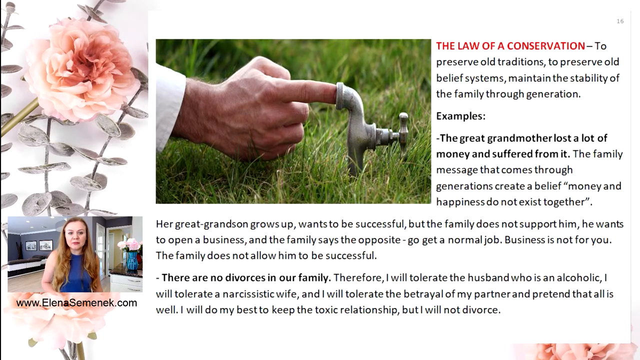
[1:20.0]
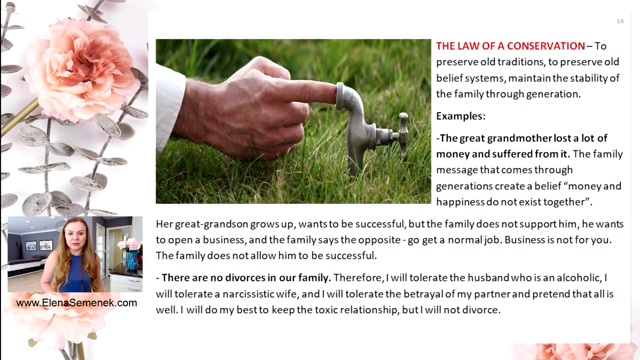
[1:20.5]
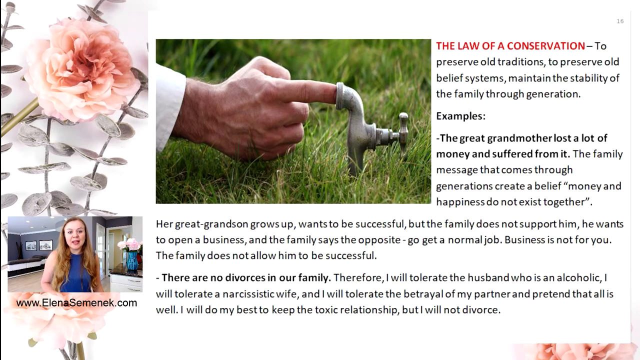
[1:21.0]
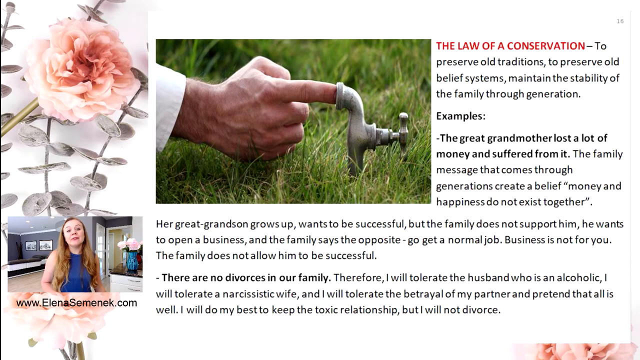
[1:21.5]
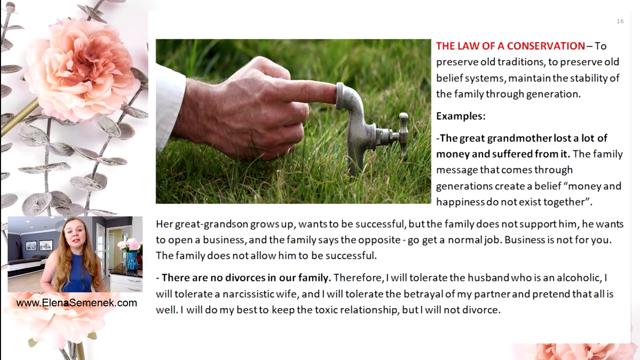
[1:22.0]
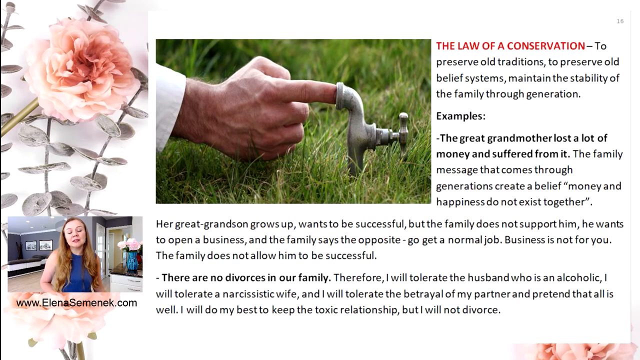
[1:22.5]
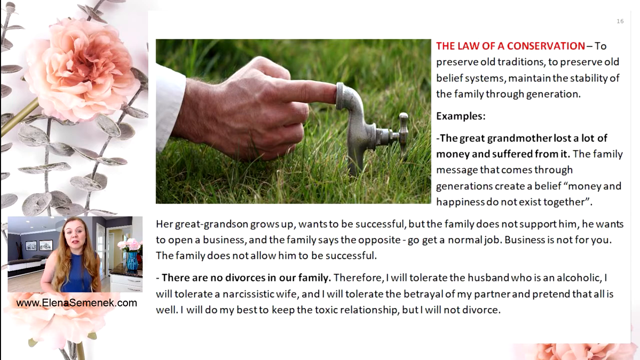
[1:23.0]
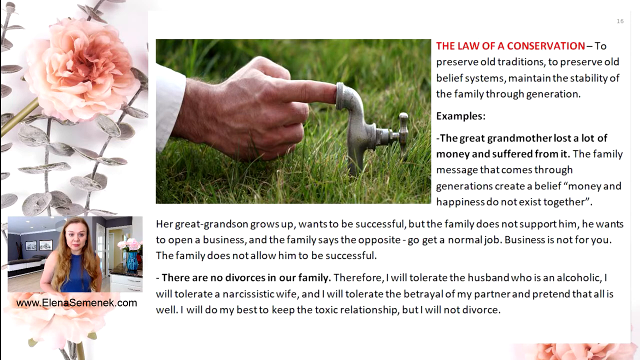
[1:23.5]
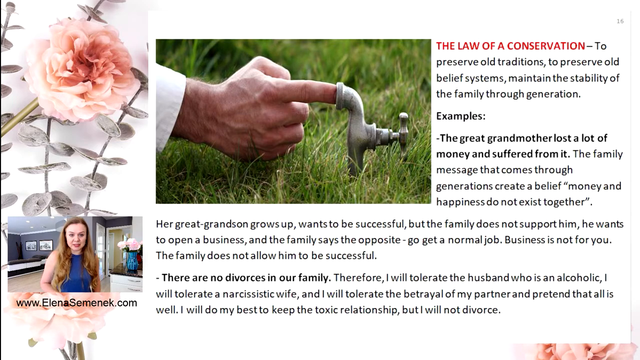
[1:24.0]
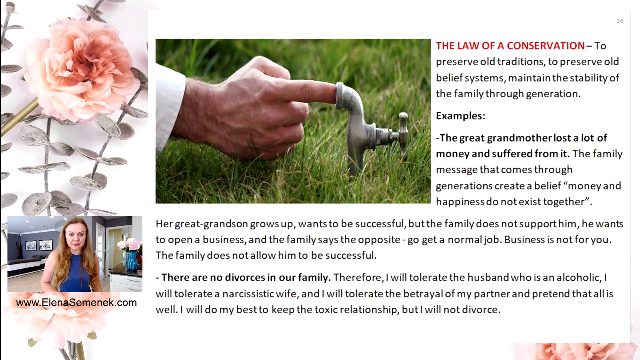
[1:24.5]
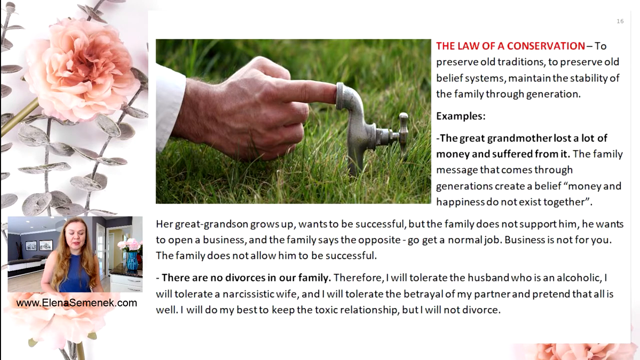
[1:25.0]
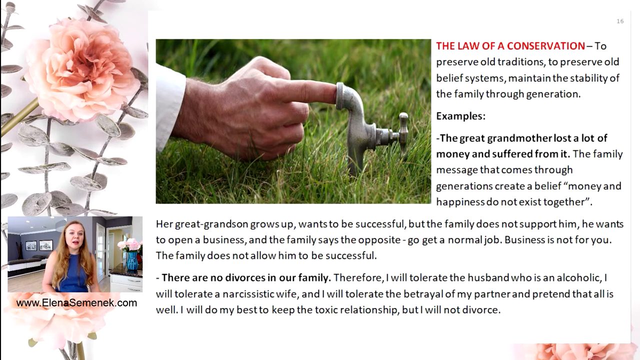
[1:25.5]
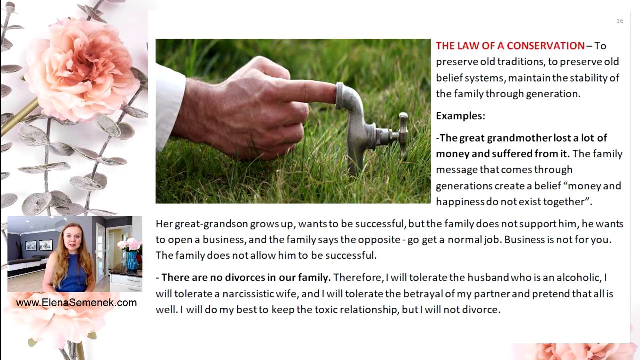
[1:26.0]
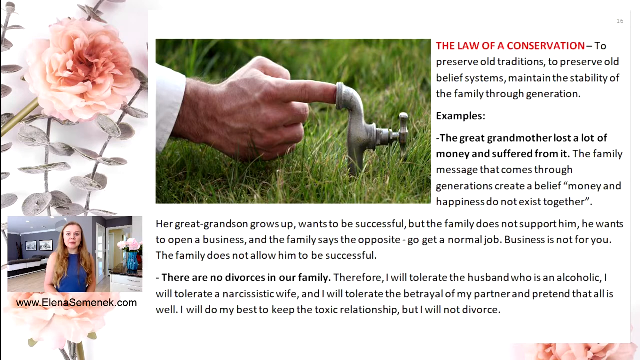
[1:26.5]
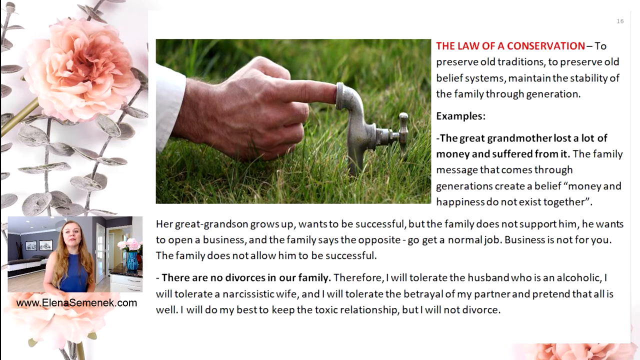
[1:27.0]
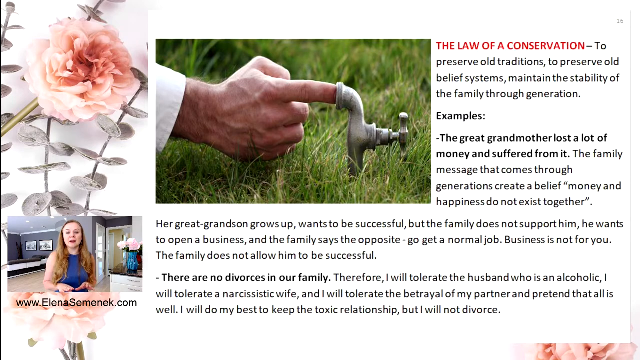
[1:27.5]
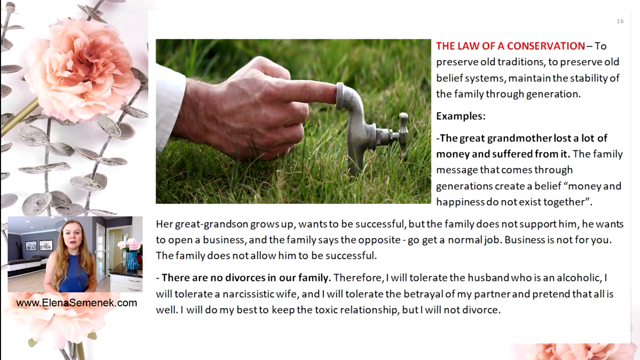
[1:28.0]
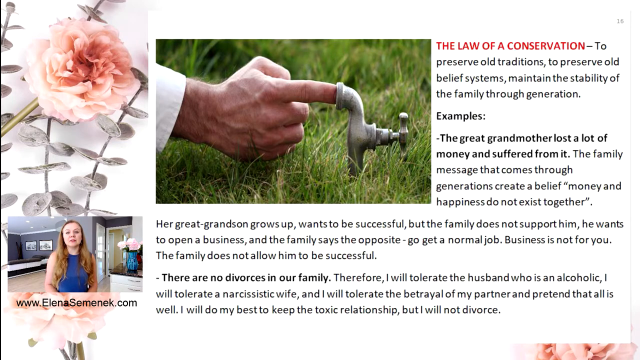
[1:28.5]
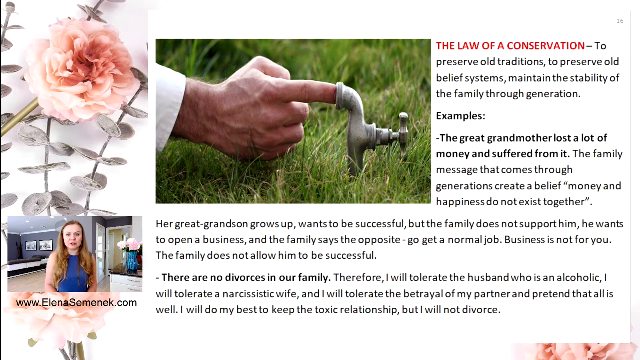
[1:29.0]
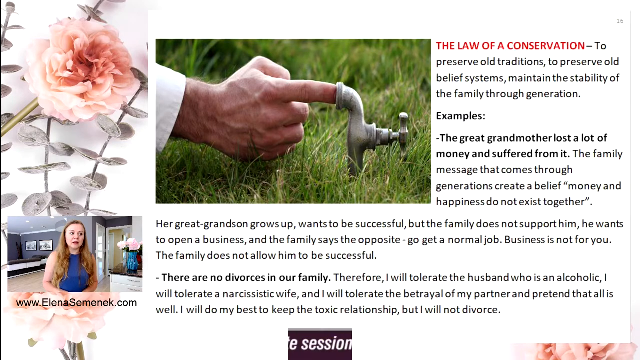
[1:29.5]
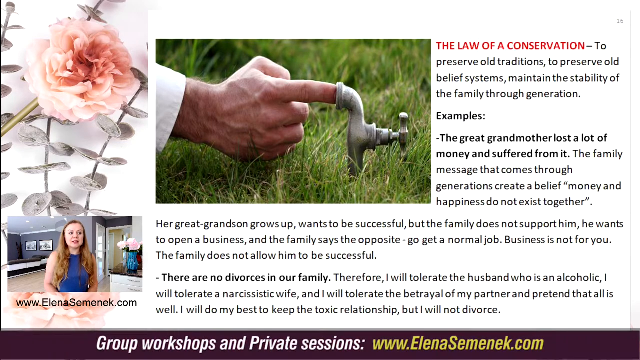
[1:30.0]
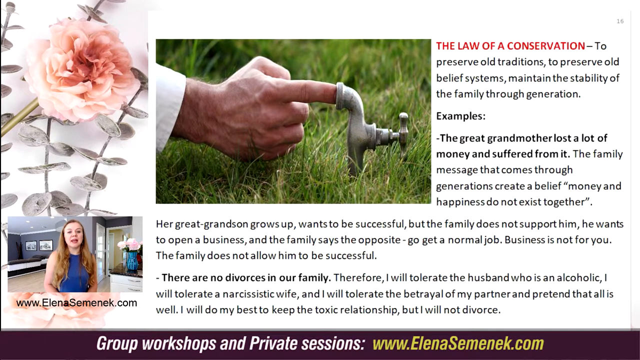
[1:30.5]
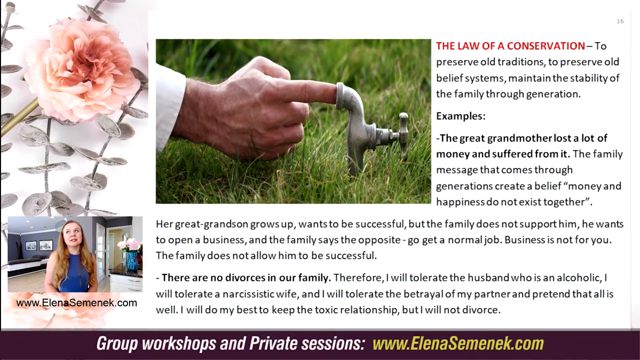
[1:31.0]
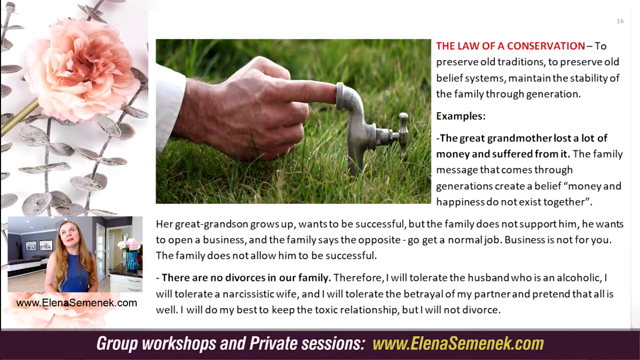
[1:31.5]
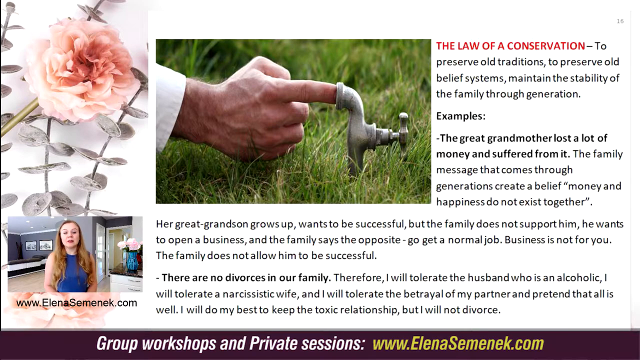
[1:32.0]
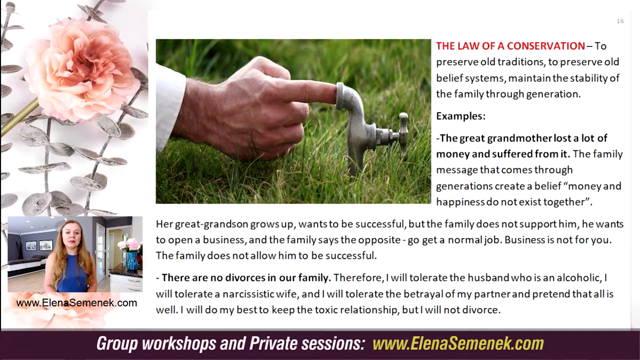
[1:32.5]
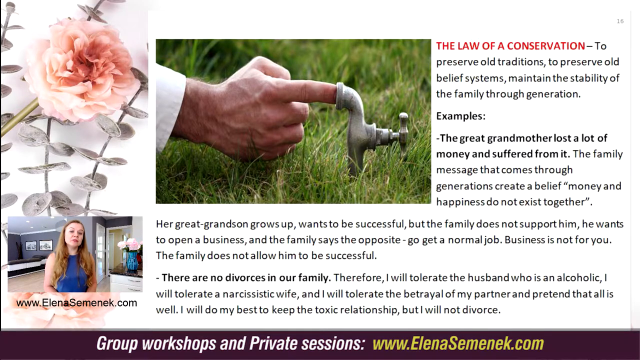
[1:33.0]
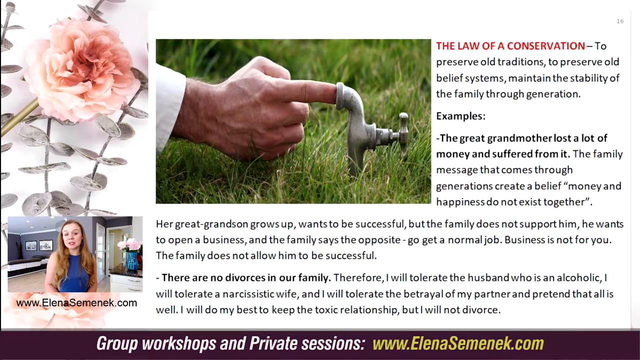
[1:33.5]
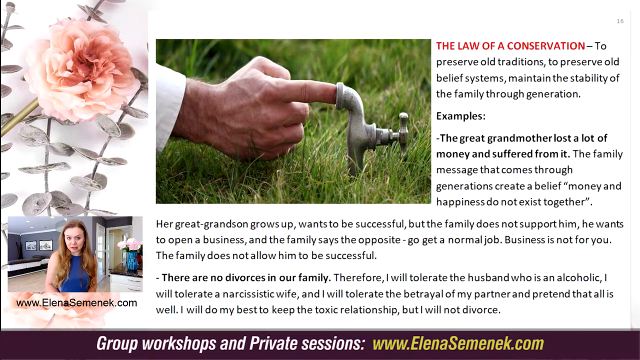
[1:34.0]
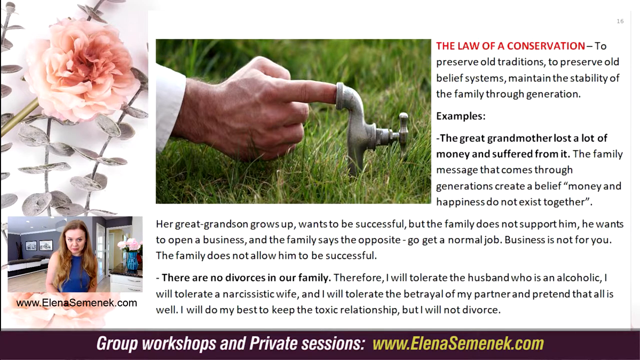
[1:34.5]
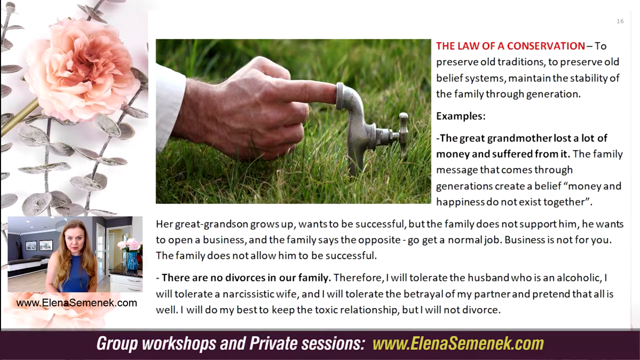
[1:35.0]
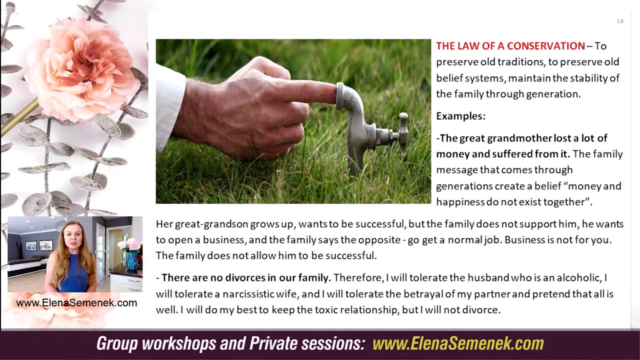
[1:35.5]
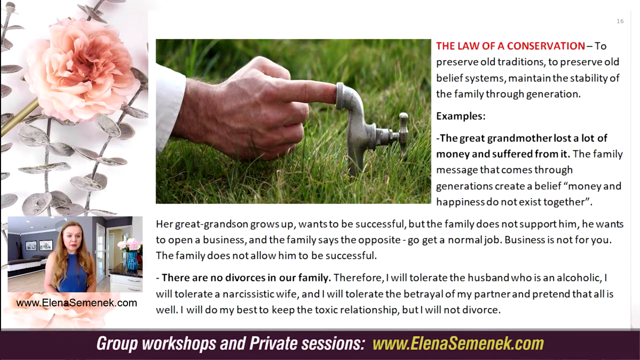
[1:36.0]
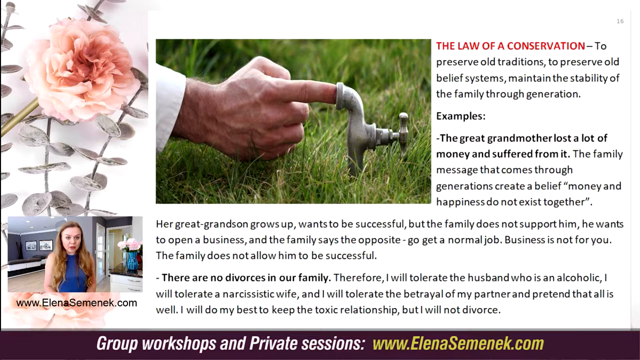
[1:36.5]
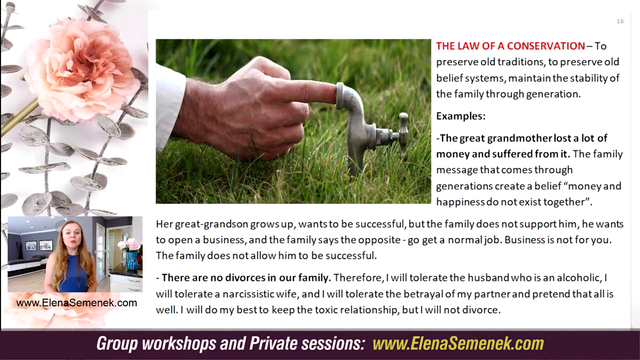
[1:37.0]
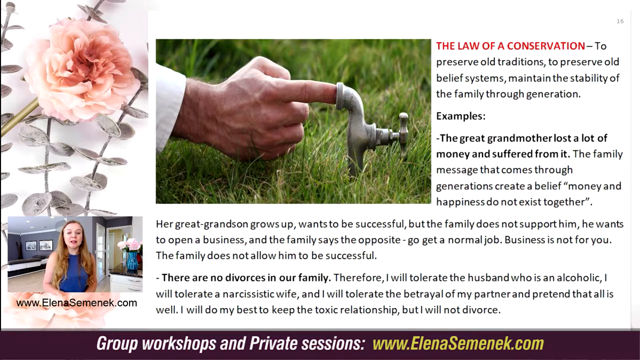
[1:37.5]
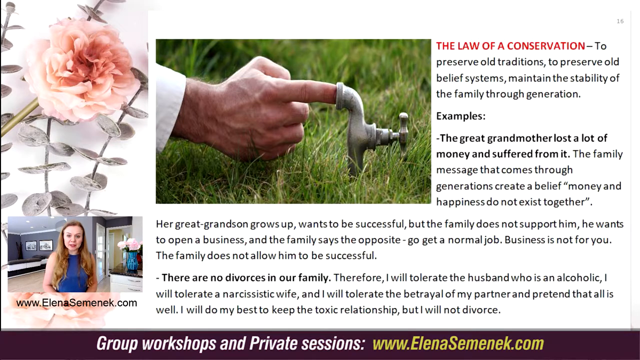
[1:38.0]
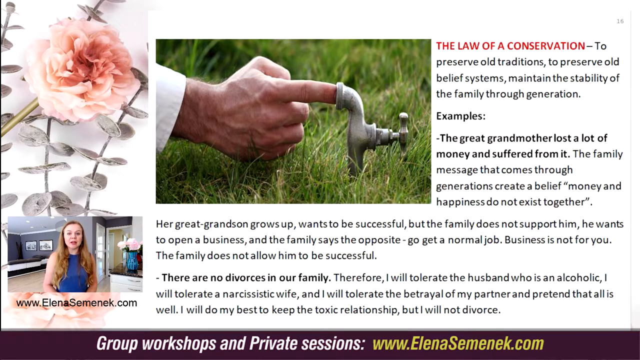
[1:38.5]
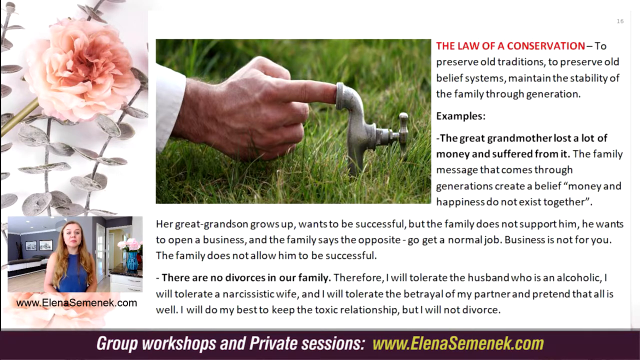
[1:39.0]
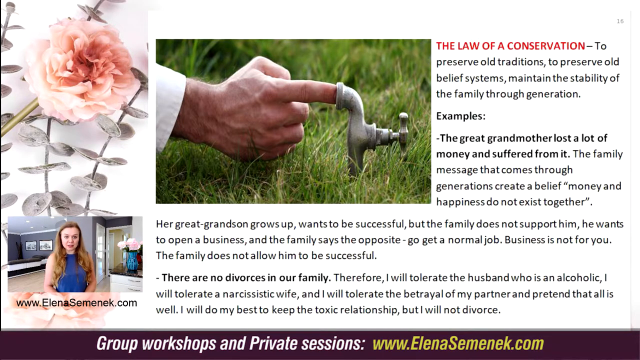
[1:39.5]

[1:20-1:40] A new banner appears at the bottom of the screen reading "Group workshops and private sessions:" followed by the website link "www.elenasemenek.com", the same link shown at the bottom of the lady's video. The next paragraph on the slide reads "Her great-grandson grows up, wants to be successful, but the family does not support him. He wants to open a business, and the family says the opposite, go get a normal job. Business is not for you. The family does not allow him to be successful." Otherwise there is no significant change or movement.